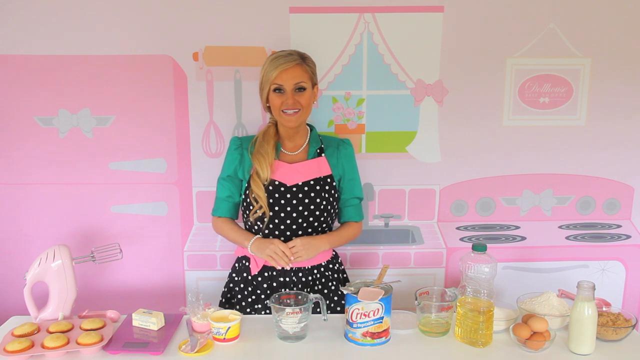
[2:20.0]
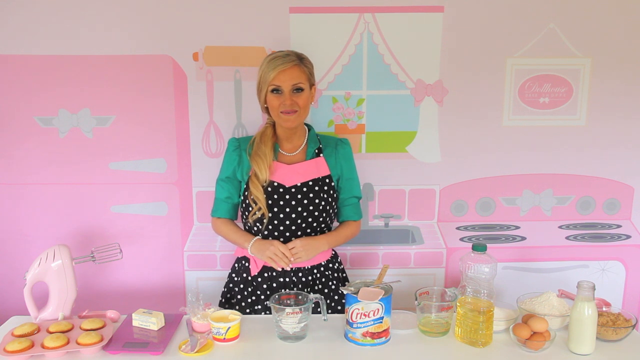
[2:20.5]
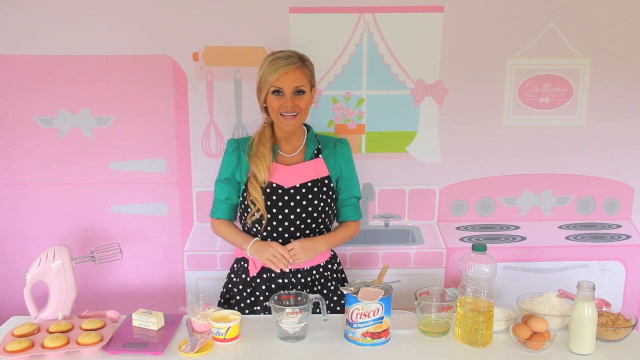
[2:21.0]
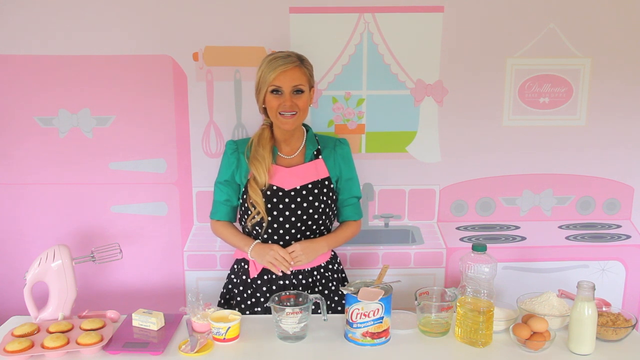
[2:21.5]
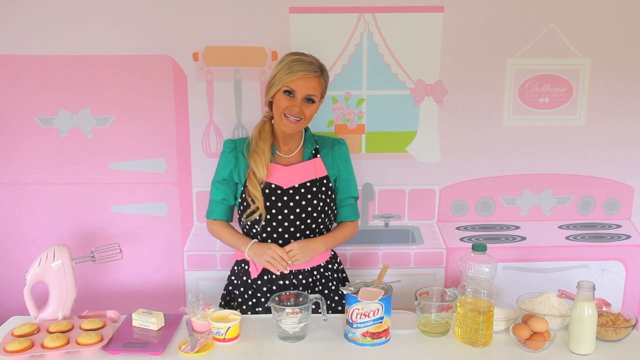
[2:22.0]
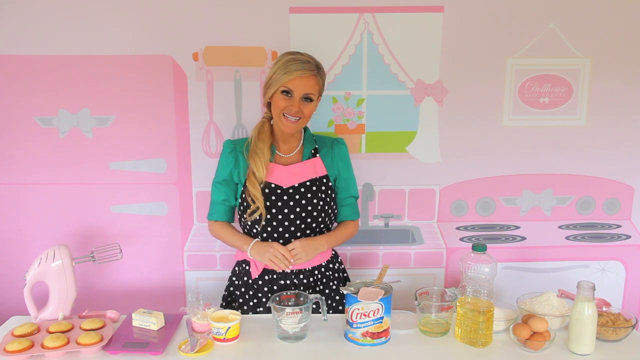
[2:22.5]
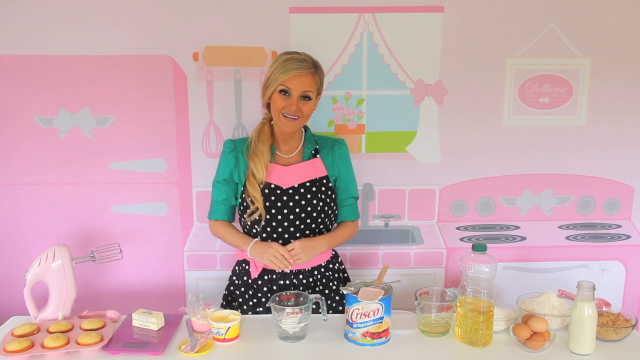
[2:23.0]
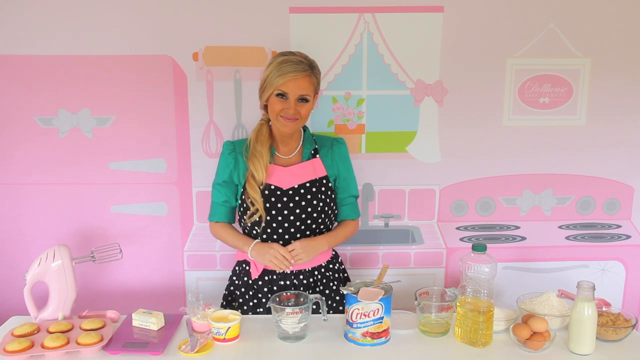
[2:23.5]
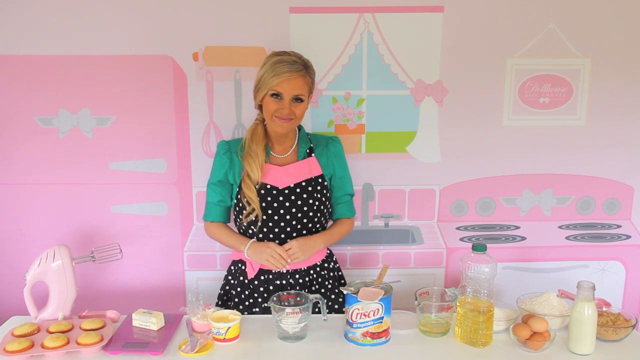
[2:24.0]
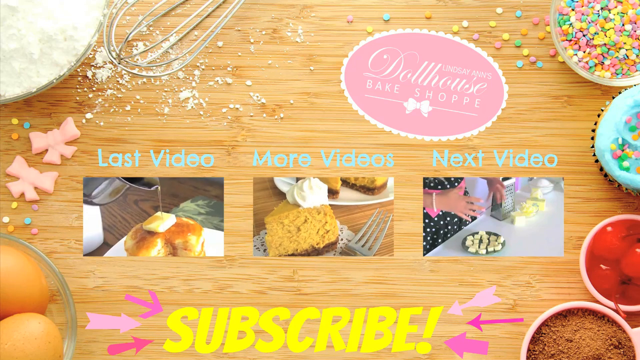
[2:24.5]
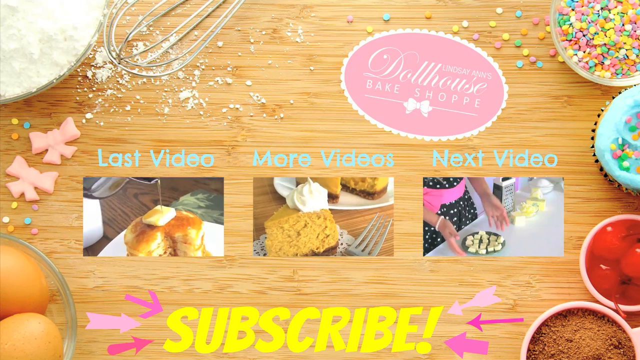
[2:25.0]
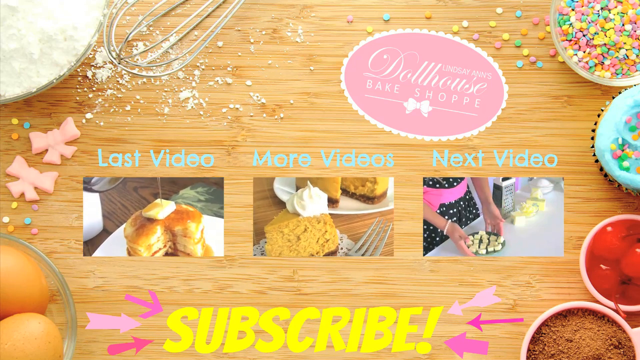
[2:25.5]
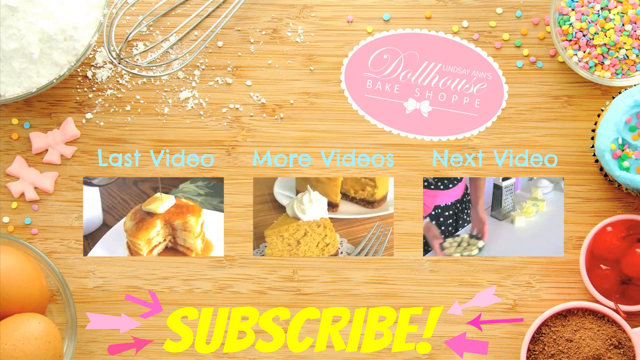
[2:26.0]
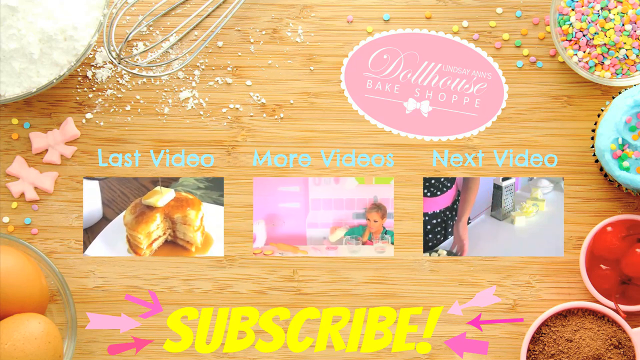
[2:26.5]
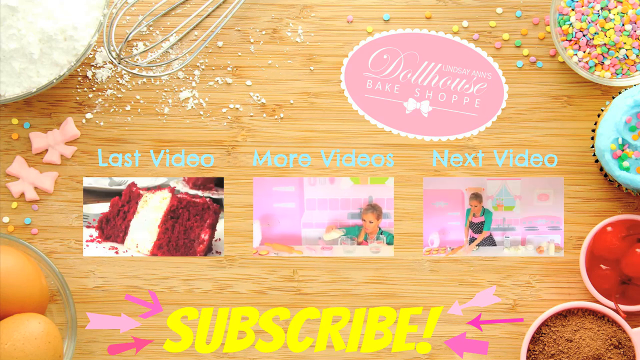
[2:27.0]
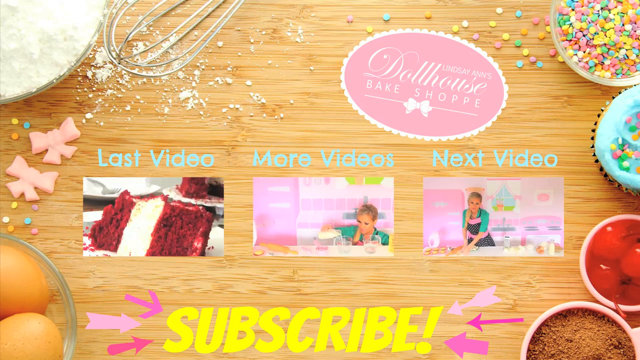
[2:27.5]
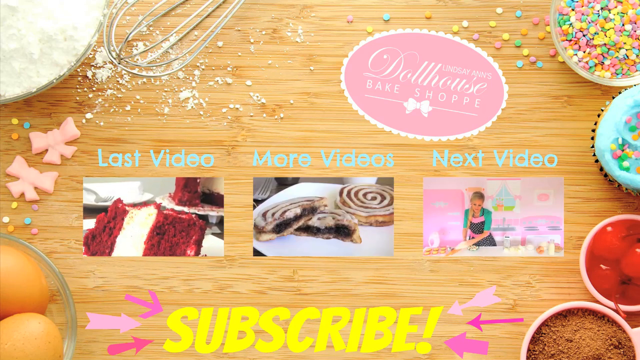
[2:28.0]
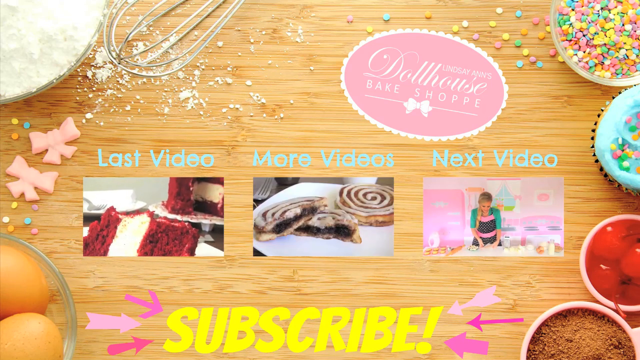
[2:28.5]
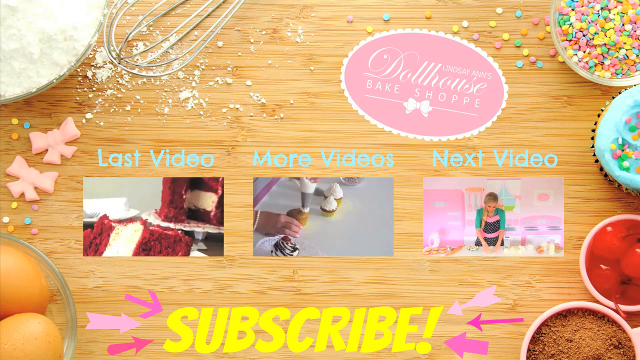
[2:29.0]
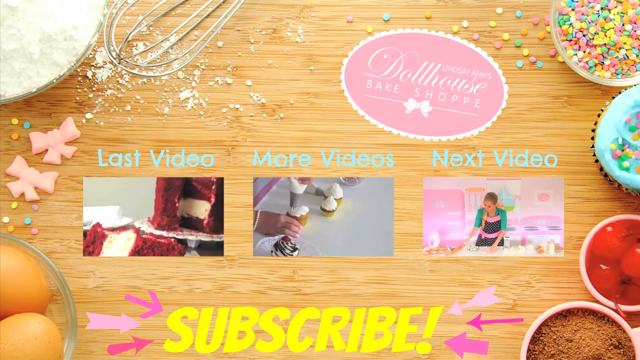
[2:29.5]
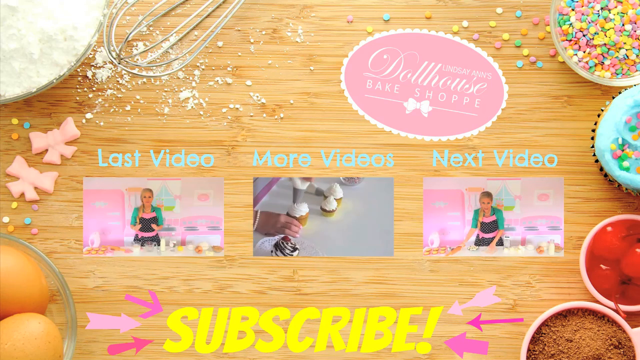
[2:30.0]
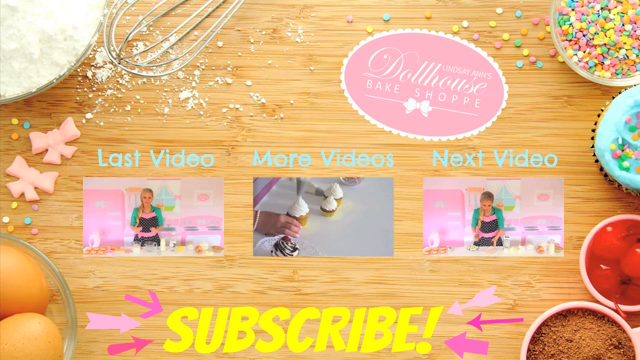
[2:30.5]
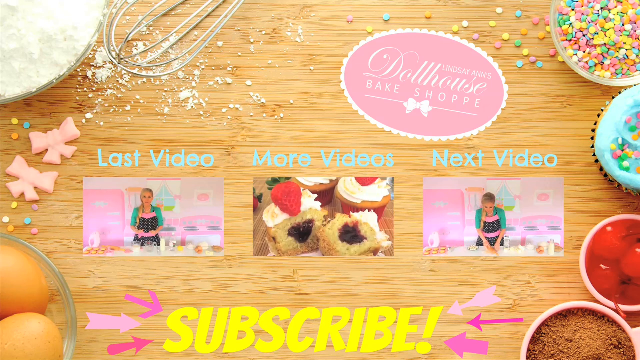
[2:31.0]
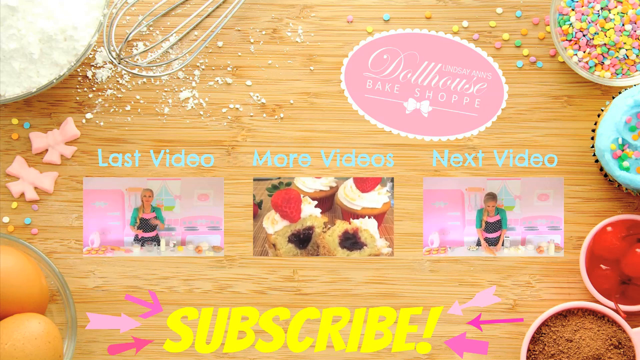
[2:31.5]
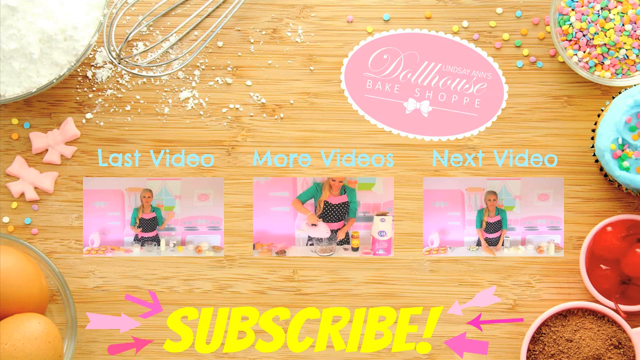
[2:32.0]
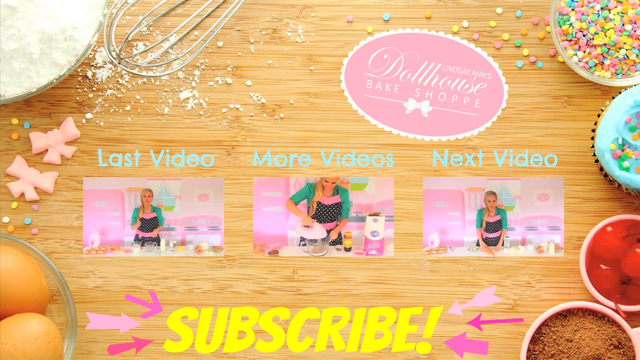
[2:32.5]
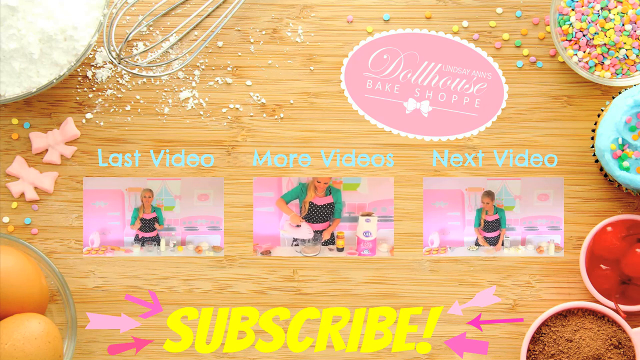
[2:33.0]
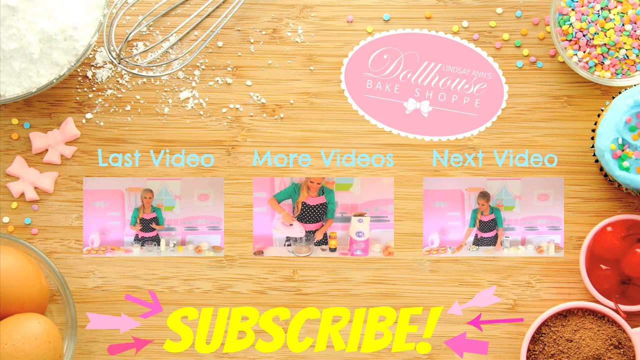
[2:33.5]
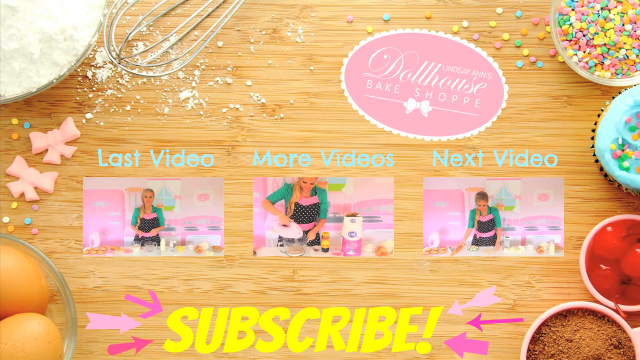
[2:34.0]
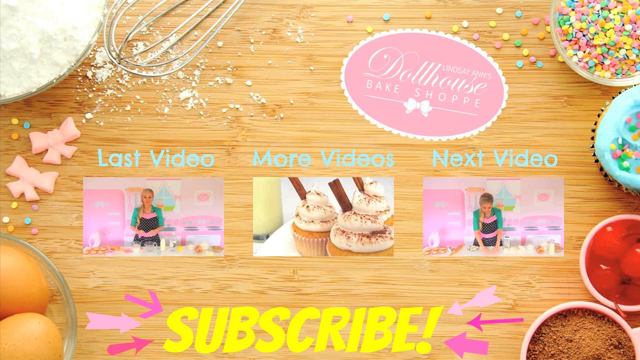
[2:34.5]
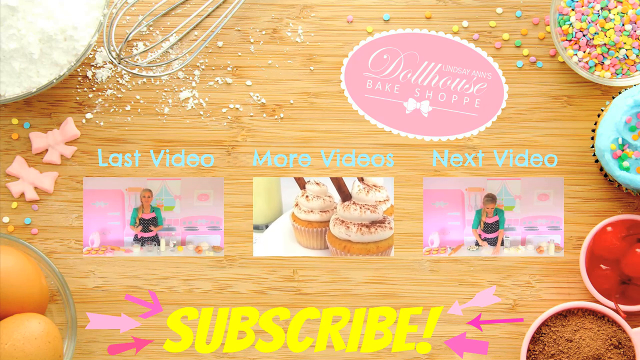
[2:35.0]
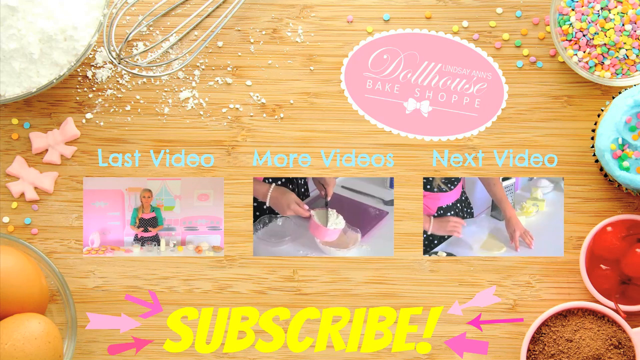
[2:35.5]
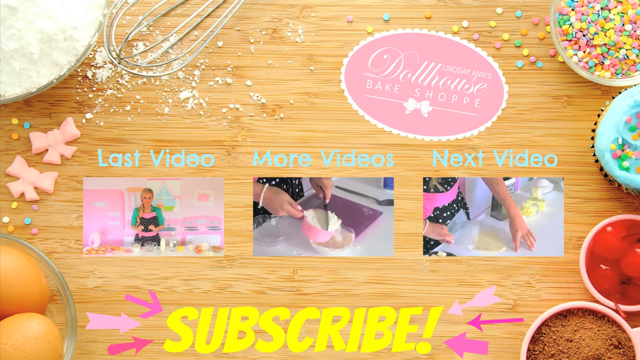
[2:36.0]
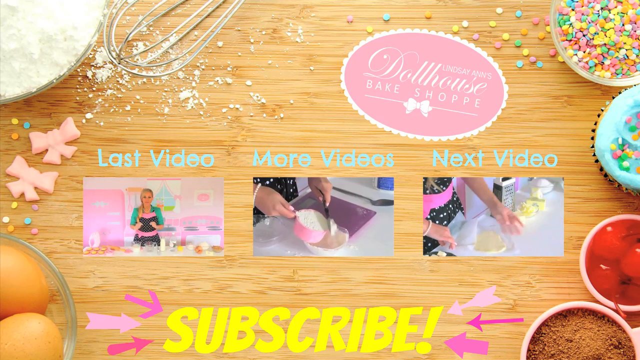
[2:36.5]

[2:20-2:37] She holds both hands together with her left fingers in front. The video then cuts to a page showing a brown table at the bottom with pink balls, what appear to be candies, and items used to color cupcakes. There is flour with a whisk on top, liquid candy on the right-hand side, a white container, what appears to be chocolate powder, and eggs. The content seems to be related to baking in her pink kitchen. Text at the top reads "Lindsley Ernest Dollhouse Bake Shop". Options for "last video", "more videos" and "next video" are written in blue, alongside images of a cut pancake, a cinnamon cake with cream on top, and a video in which she seems to be holding what appear to be tiny cakes.